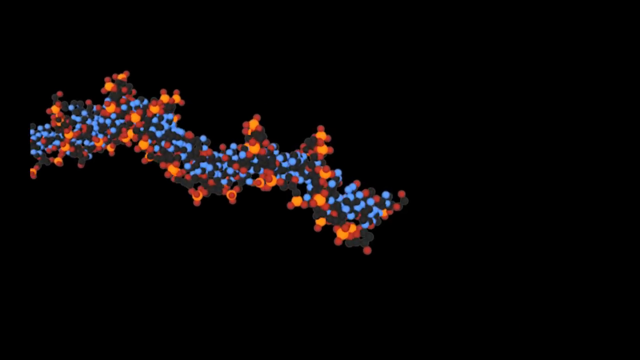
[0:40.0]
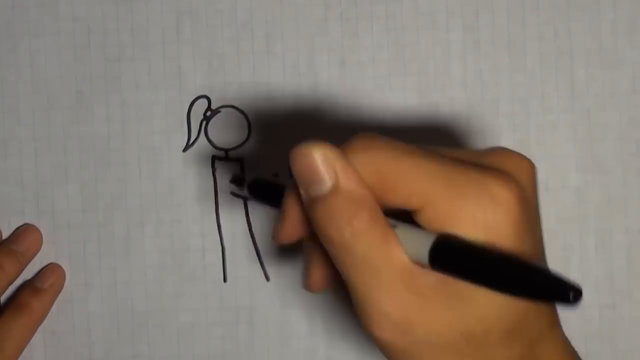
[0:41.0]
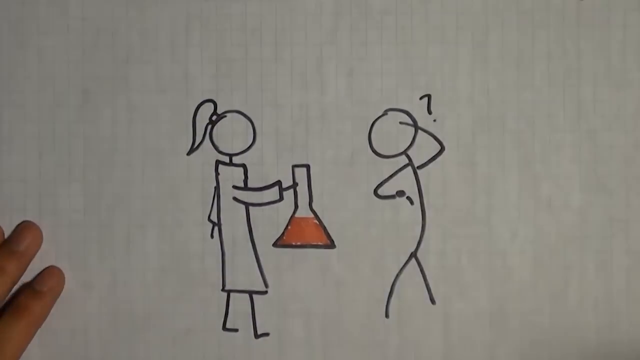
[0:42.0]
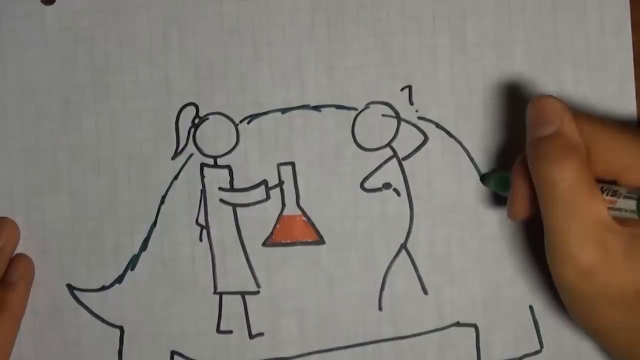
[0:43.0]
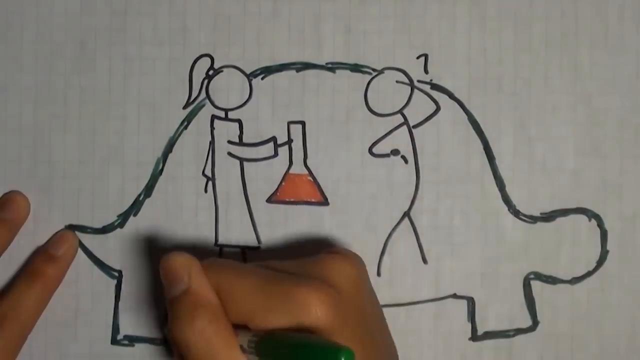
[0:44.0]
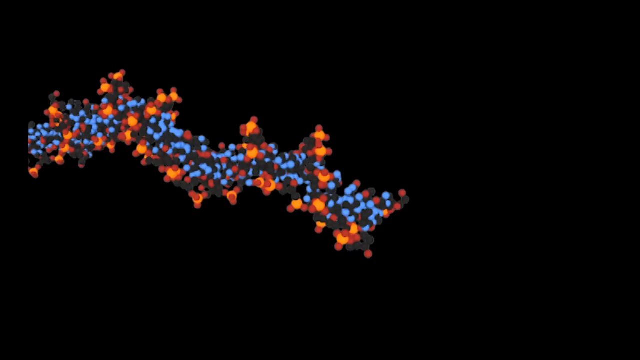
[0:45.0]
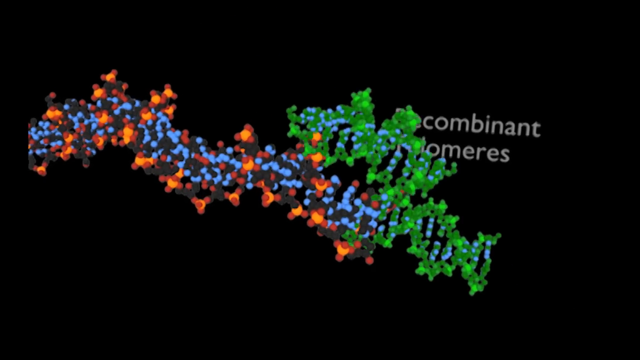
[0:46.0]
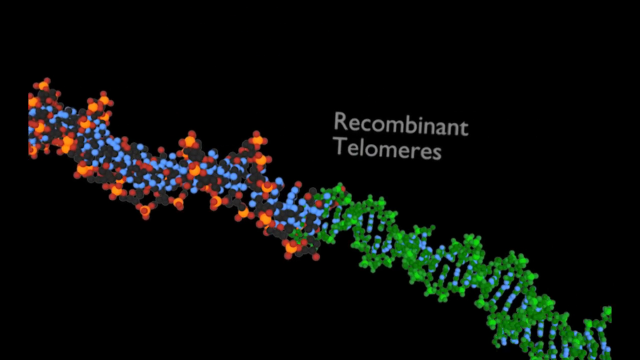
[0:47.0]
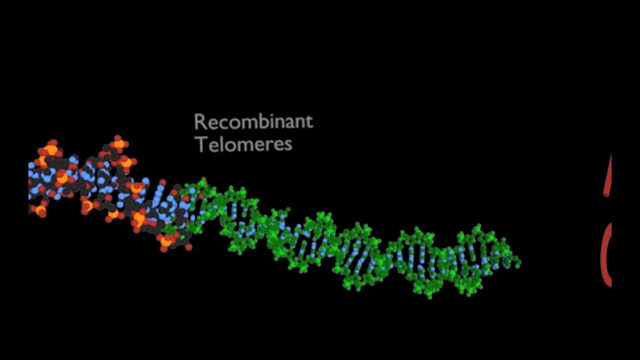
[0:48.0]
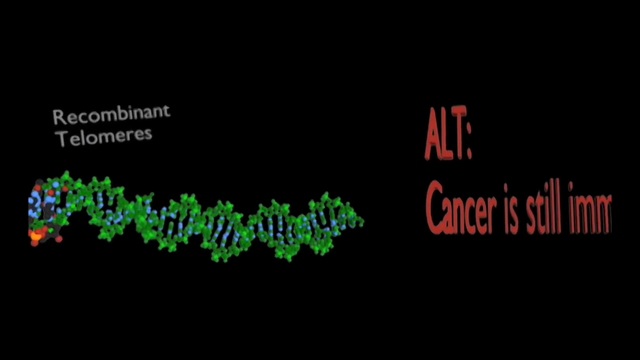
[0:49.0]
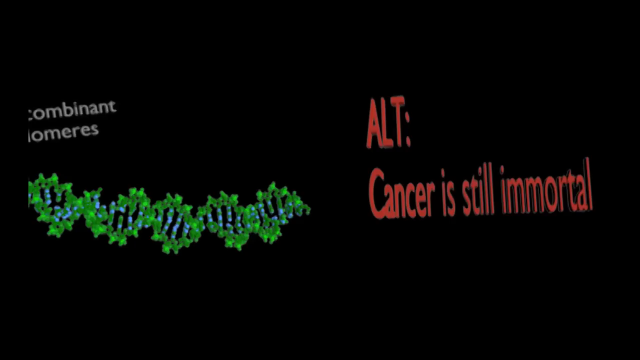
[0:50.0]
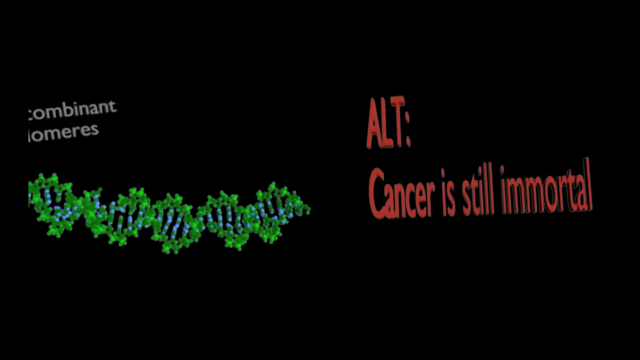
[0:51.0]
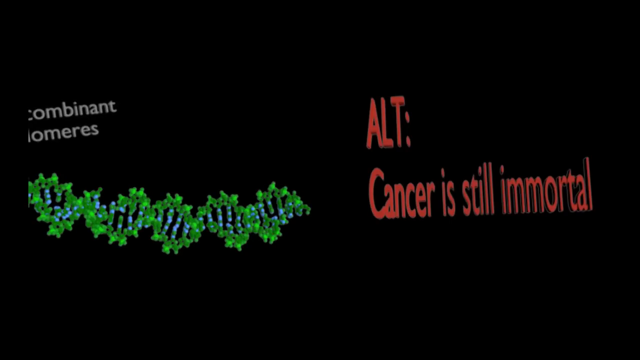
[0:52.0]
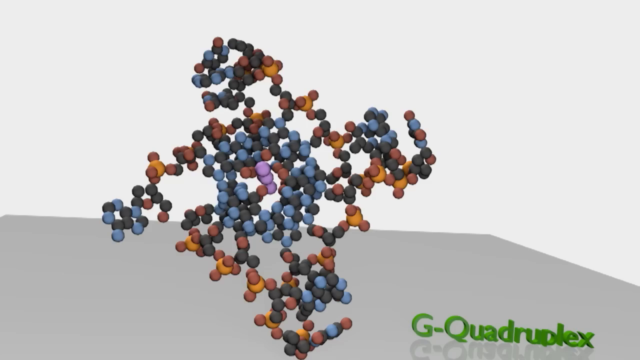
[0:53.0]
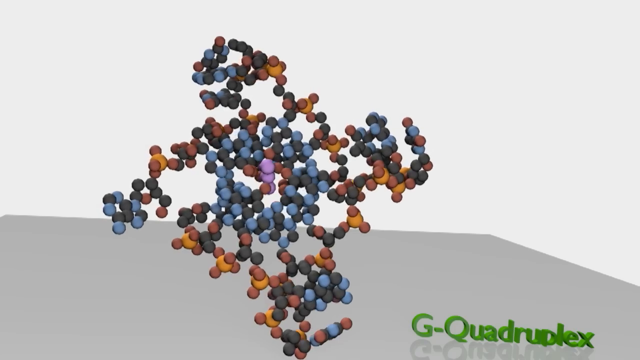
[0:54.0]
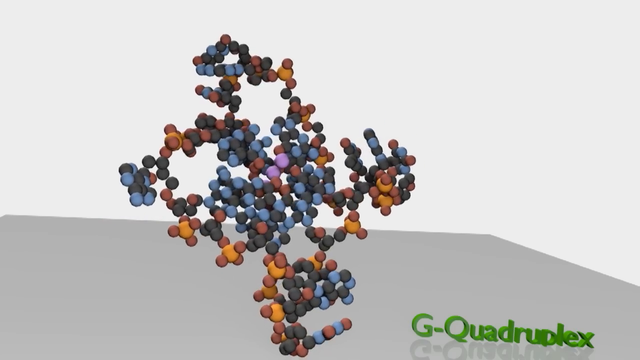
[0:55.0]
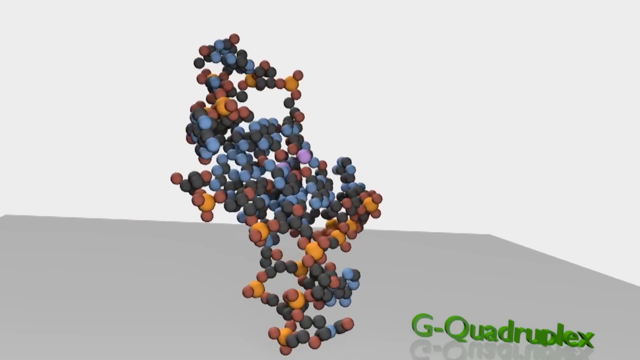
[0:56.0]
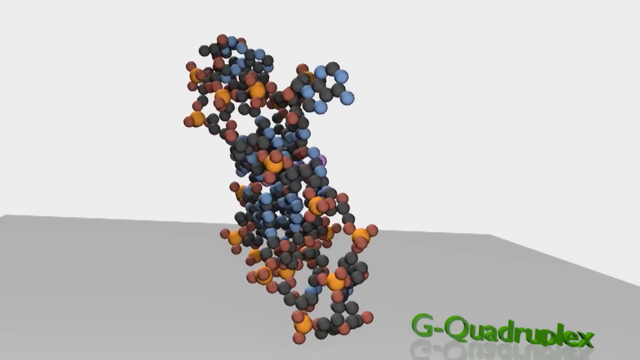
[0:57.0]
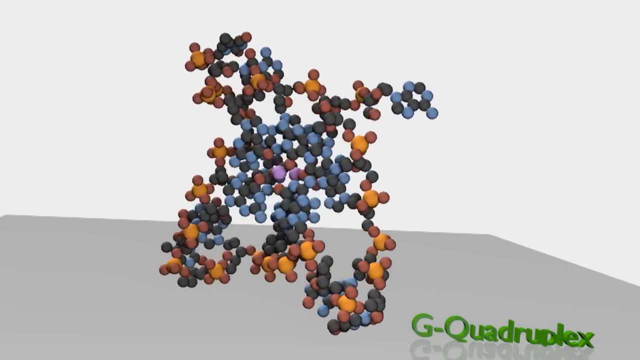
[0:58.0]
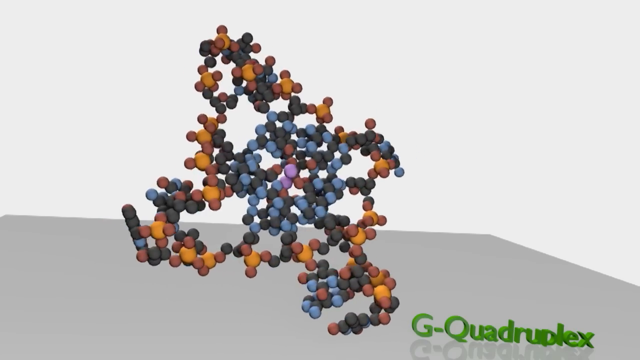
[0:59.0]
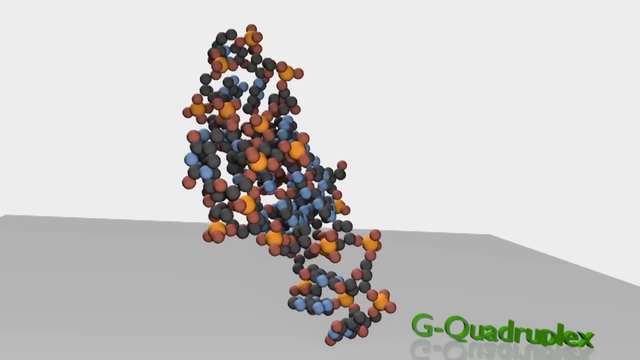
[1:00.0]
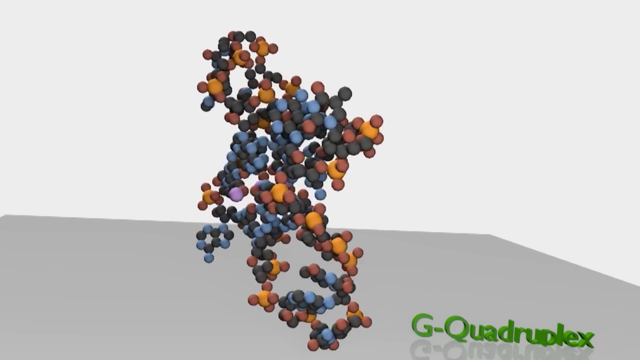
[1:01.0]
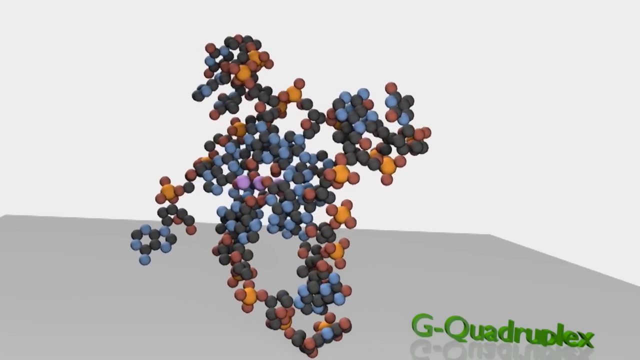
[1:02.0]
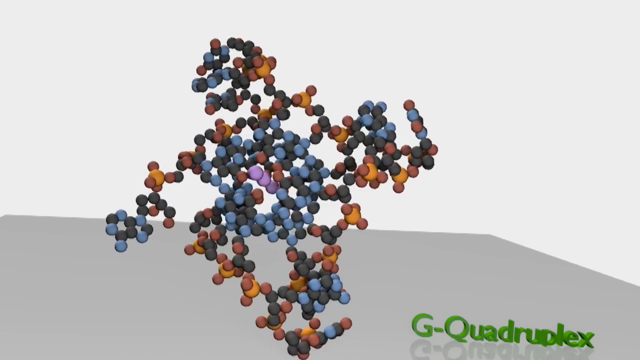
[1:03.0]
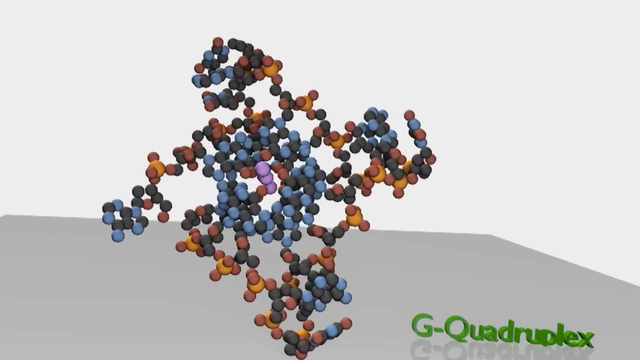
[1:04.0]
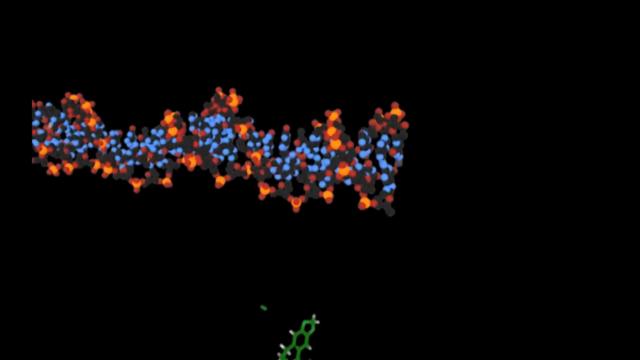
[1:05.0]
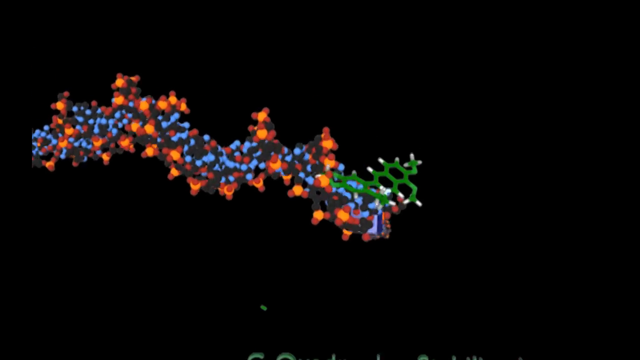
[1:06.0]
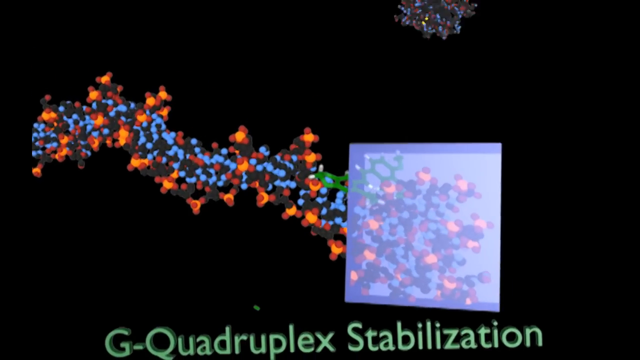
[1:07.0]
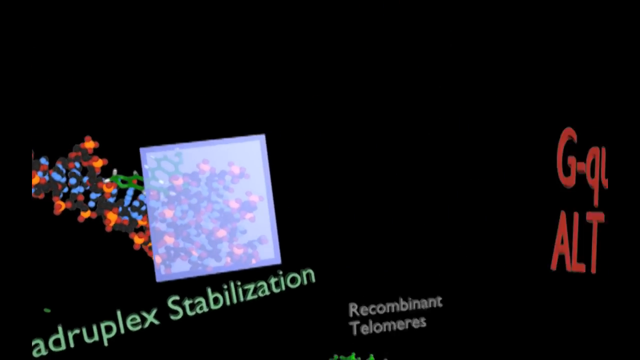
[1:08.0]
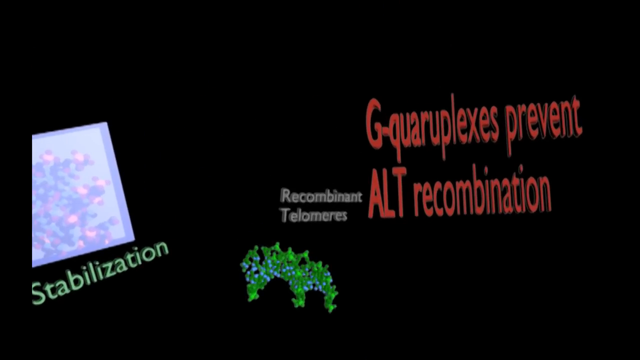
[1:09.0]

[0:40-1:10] A person draws a person in a laboratory holding a beaker or a flask, while another figure has a question mark over its head. Next comes a picture of recombinant telomeres with "alternate cancer is still immortal." Then the G quadruplex appears along with a bunch of circles, possibly molecules.